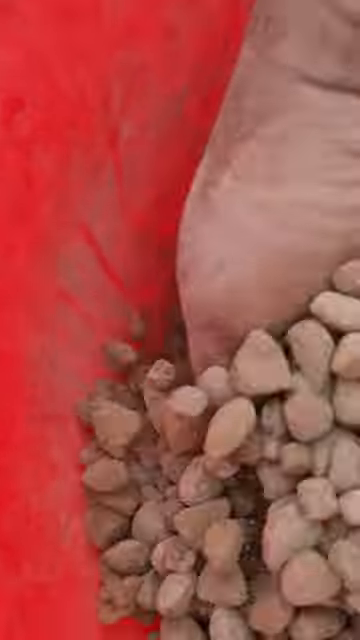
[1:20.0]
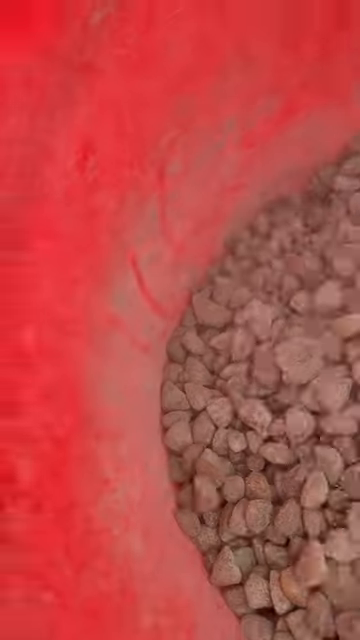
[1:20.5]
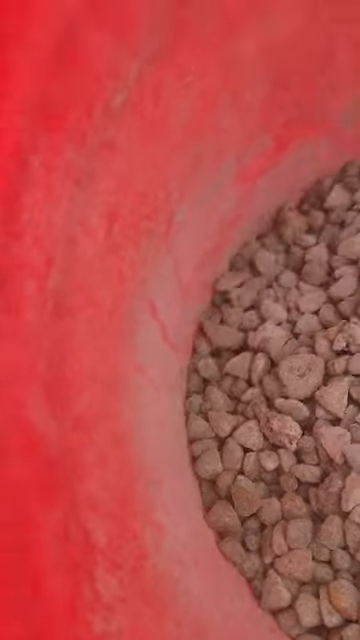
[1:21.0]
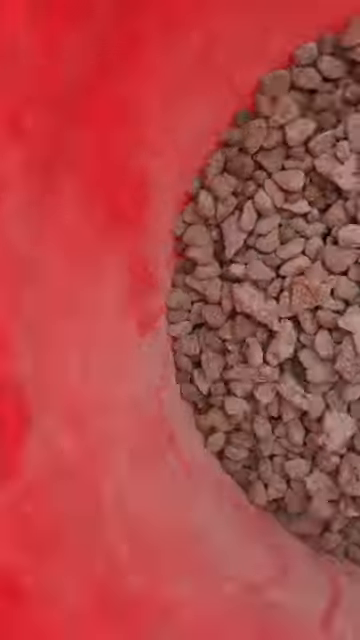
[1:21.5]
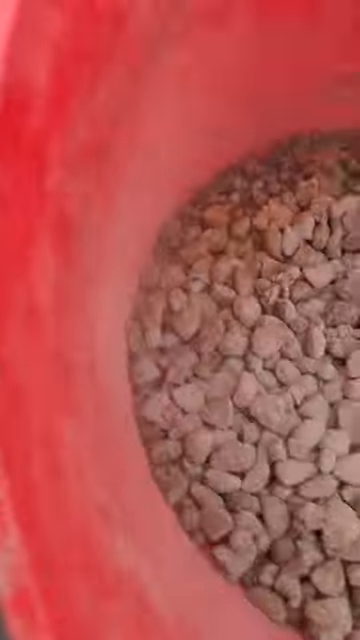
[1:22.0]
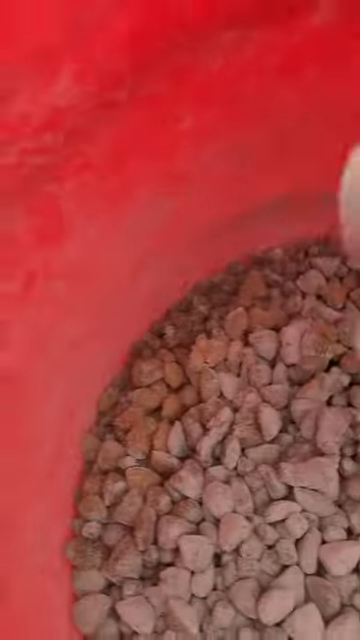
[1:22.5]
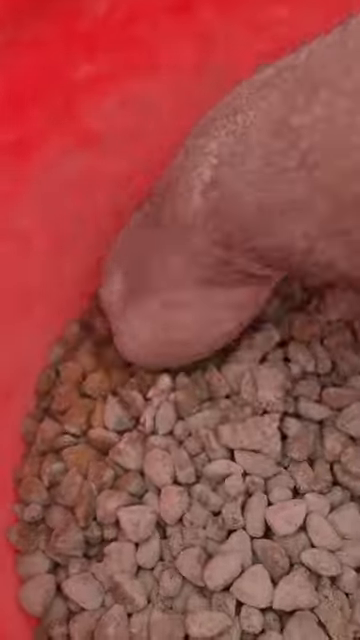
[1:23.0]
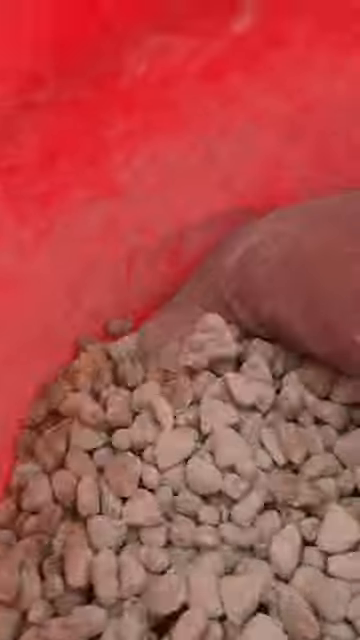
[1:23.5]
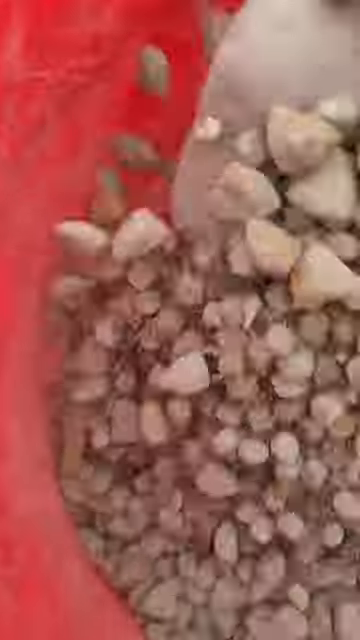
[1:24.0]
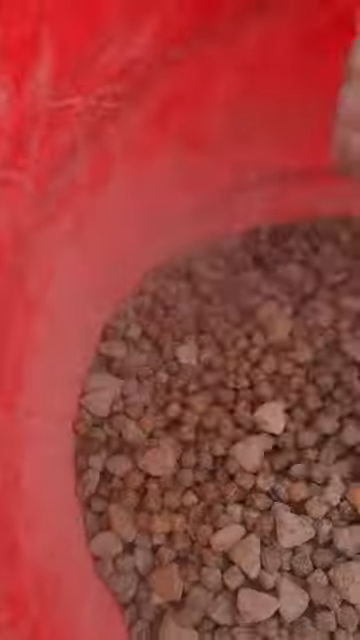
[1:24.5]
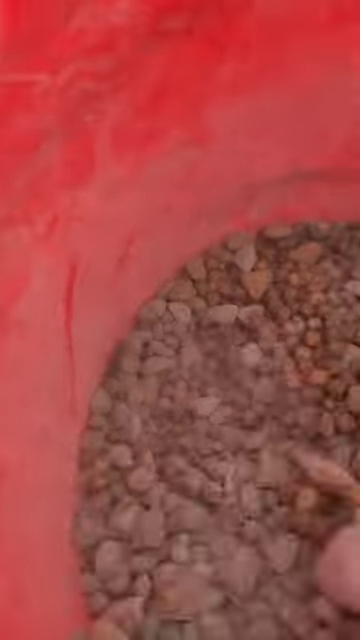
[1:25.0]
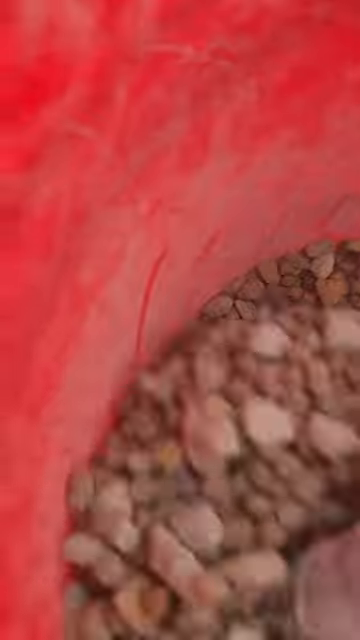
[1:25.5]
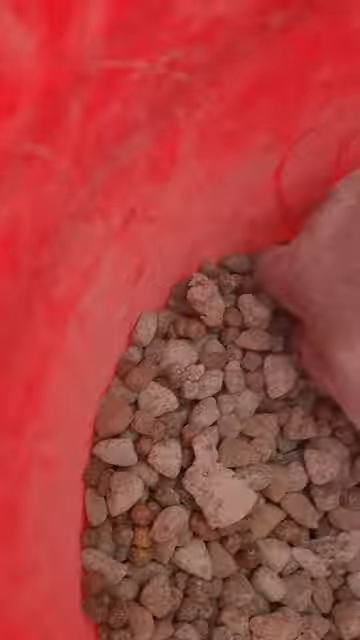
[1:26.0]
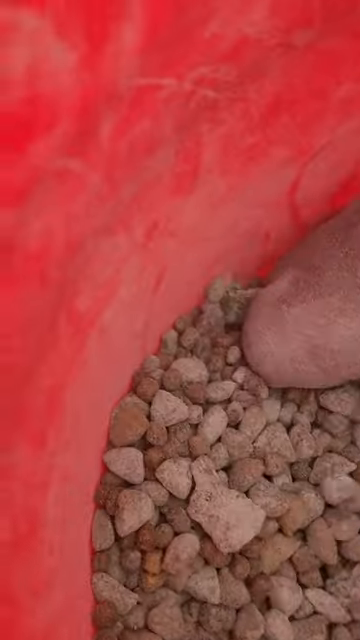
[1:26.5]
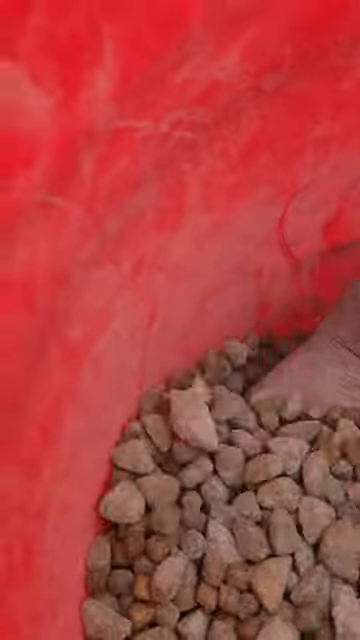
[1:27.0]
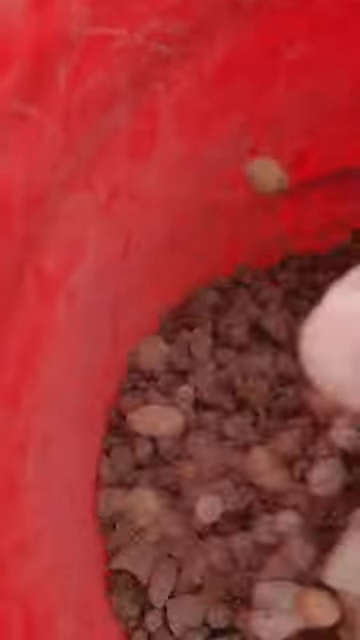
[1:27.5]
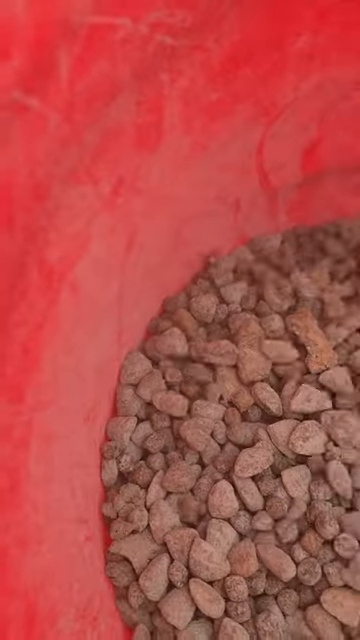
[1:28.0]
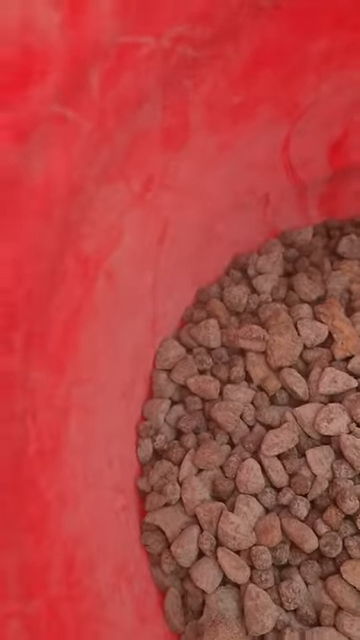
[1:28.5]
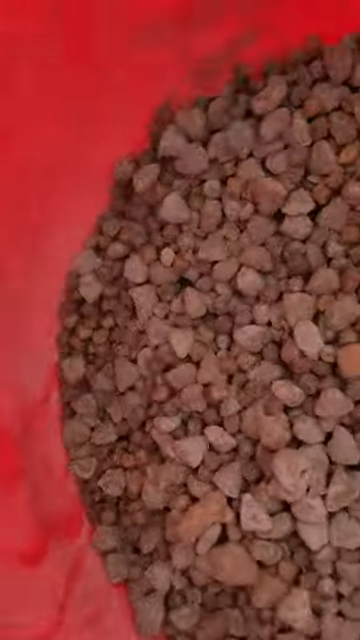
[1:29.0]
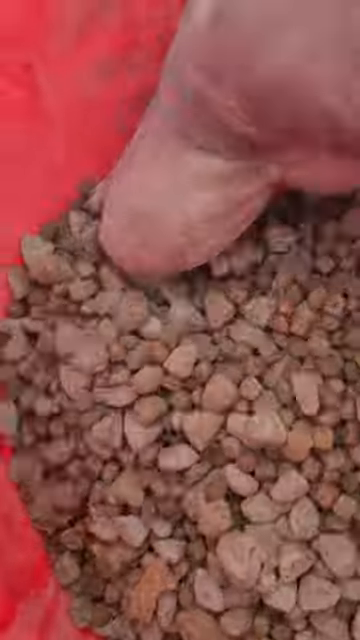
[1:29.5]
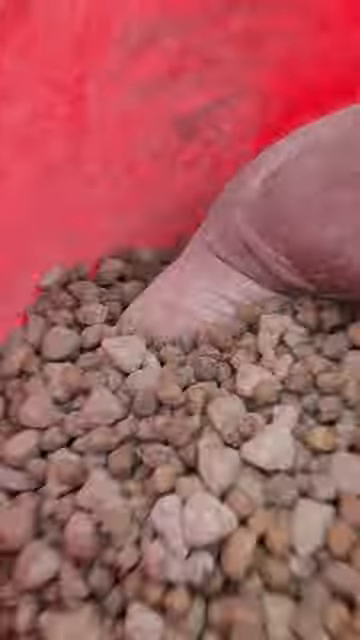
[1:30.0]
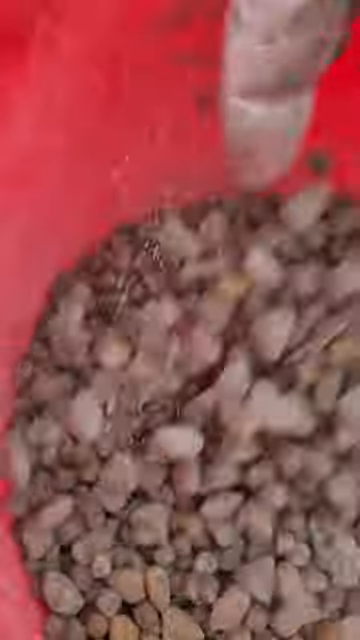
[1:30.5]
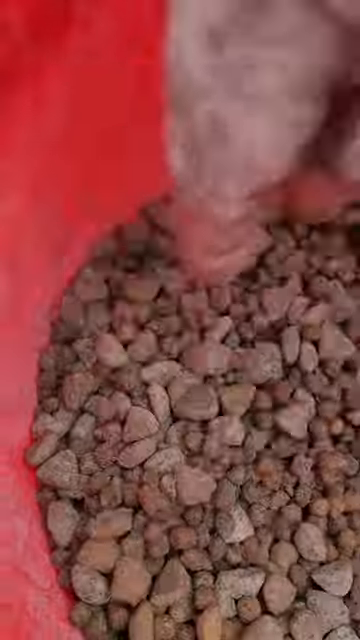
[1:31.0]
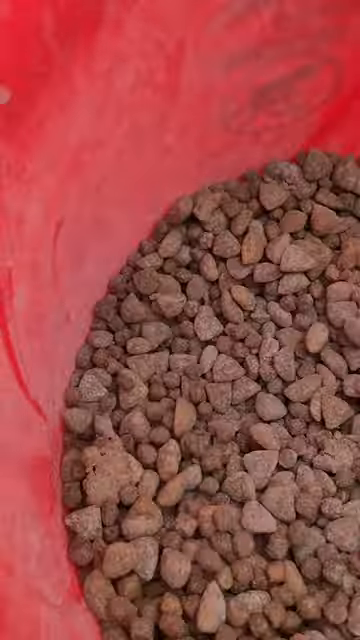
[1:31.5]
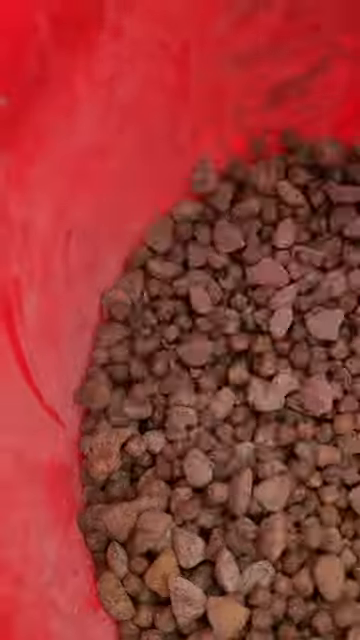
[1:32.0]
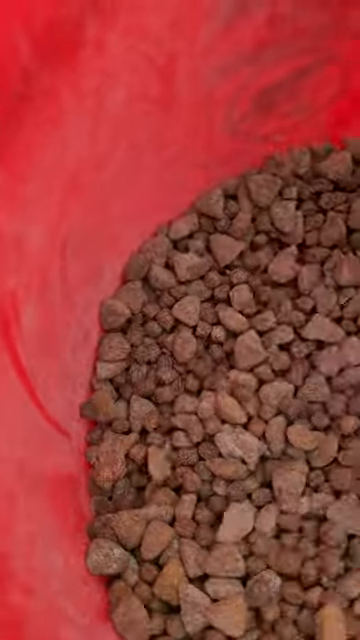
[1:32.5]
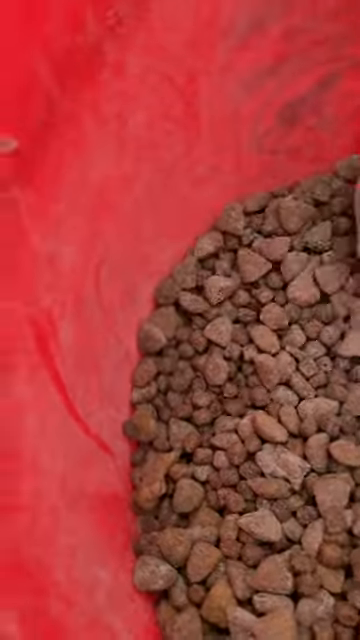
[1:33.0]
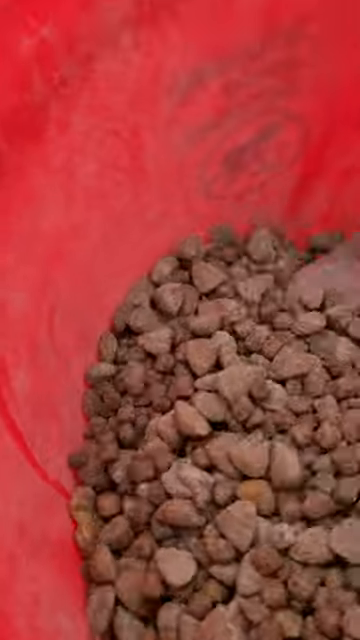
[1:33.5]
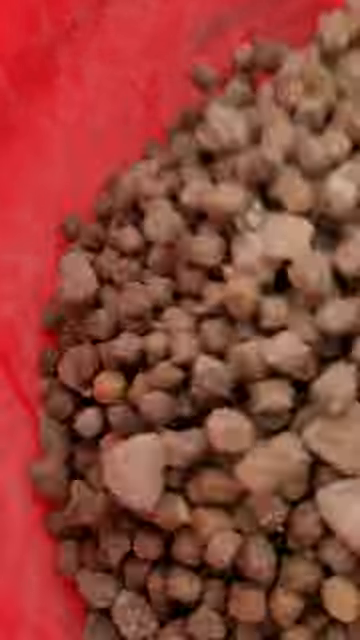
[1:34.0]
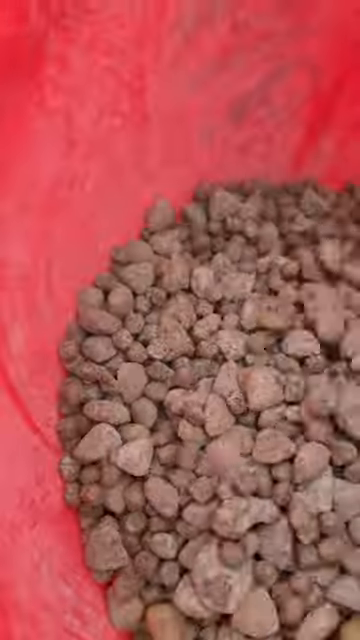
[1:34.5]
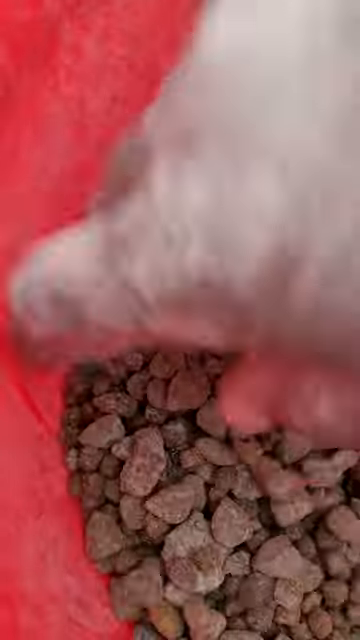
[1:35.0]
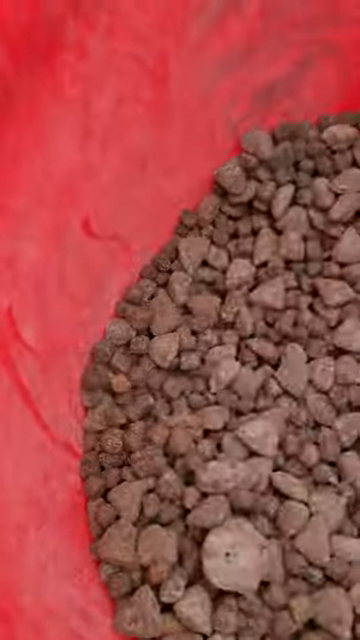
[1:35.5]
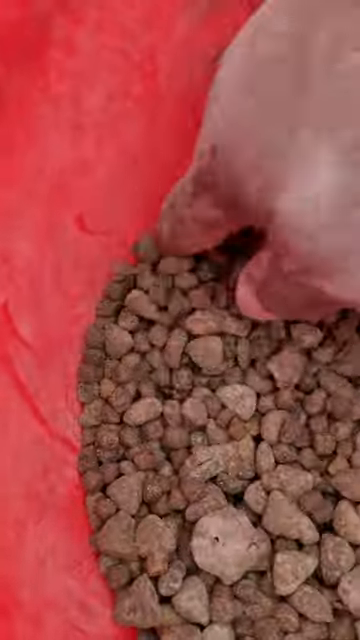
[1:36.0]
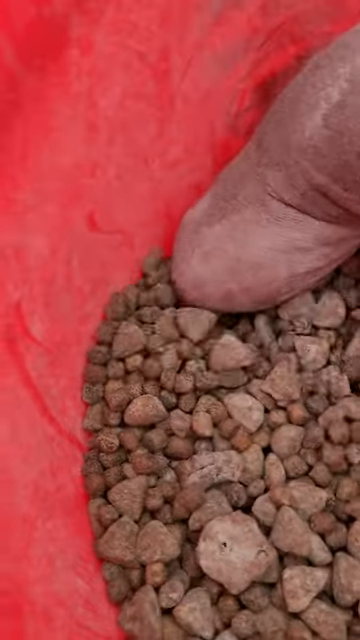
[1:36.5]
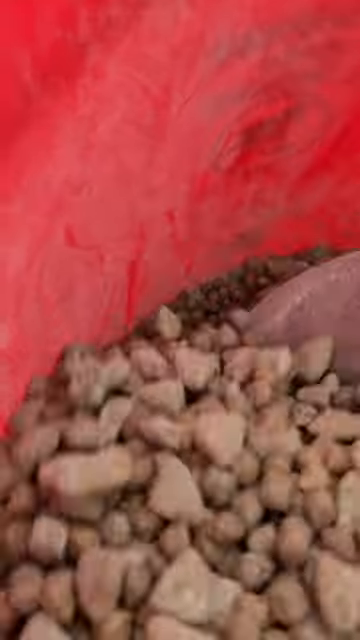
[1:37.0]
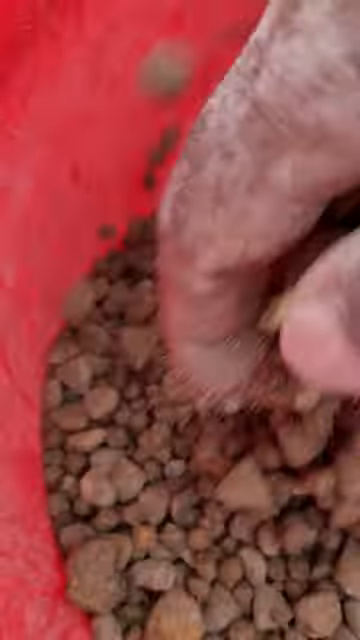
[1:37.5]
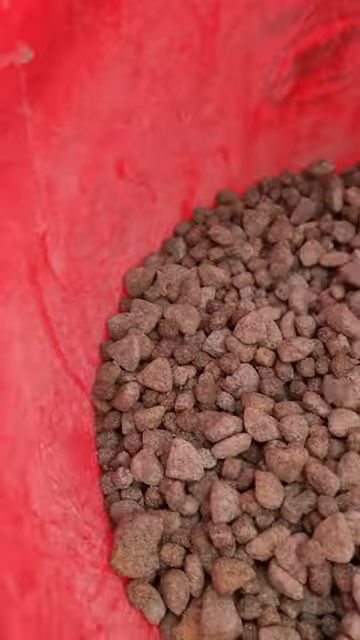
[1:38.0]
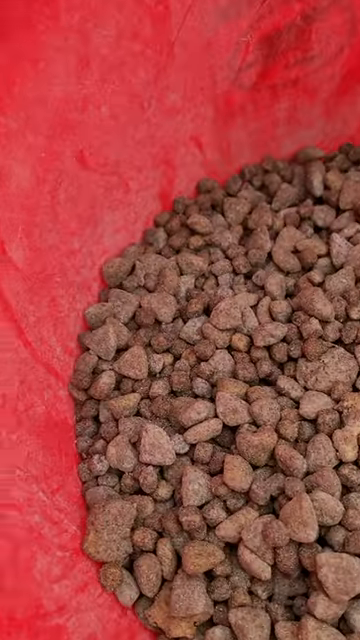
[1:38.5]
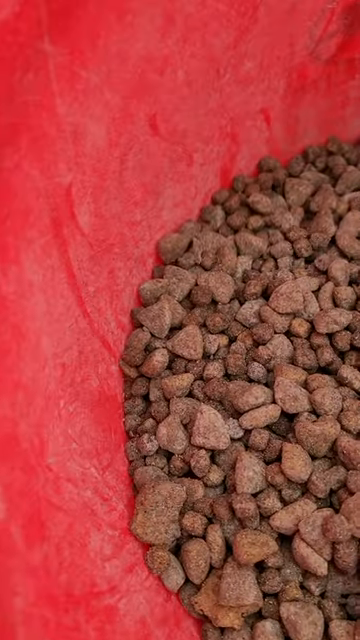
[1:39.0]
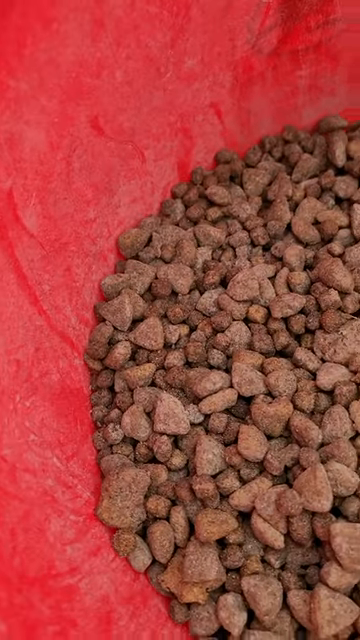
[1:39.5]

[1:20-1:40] A zoomed-in view shows the food and powder mixture inside the red bucket as the owner stirs it with his hand, continuously lifting the food up from the bottom of the bucket and mixing it all together. The camera holds a close-up of the person's hand and the brown food, mixed with the white powder from the white bag; the powder no longer looks visible because it is all mixed into the food. The camera angle does not really change.